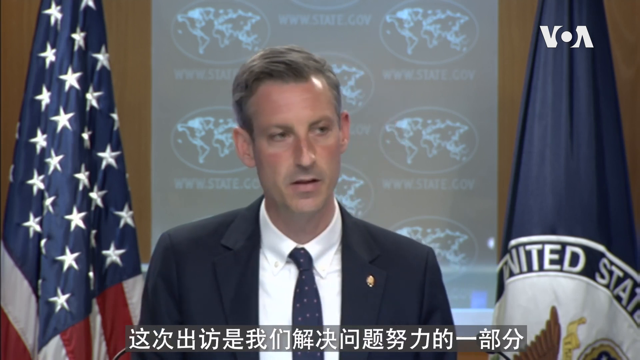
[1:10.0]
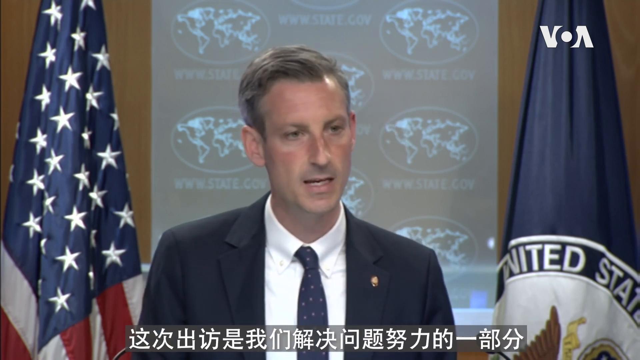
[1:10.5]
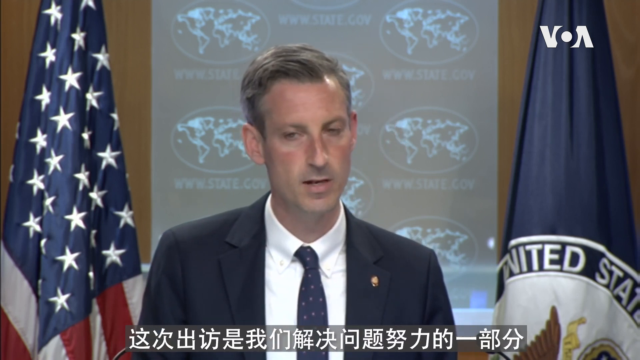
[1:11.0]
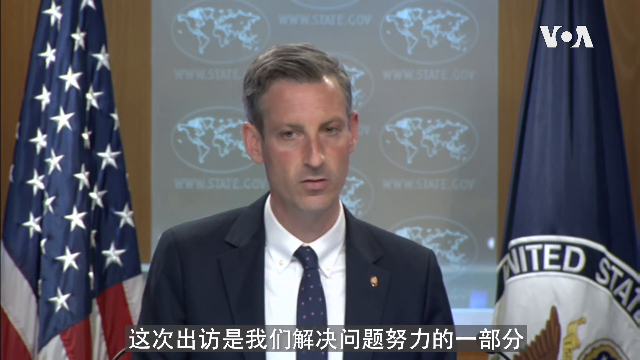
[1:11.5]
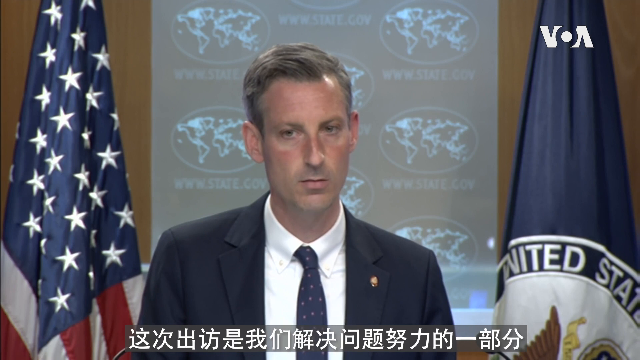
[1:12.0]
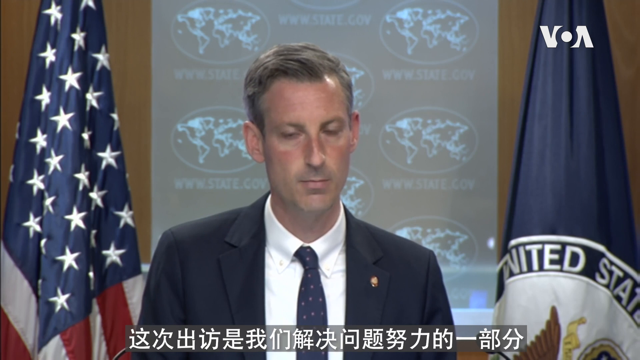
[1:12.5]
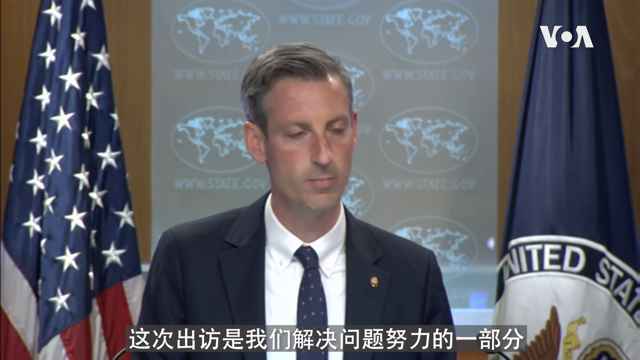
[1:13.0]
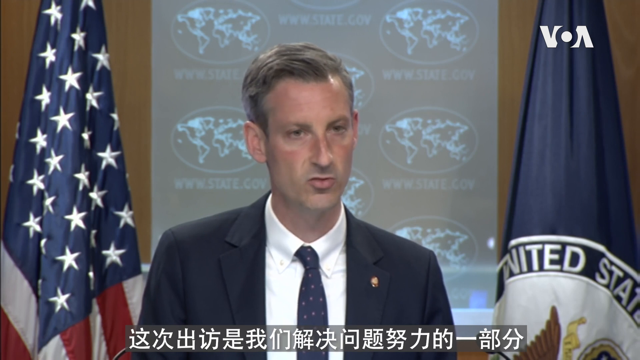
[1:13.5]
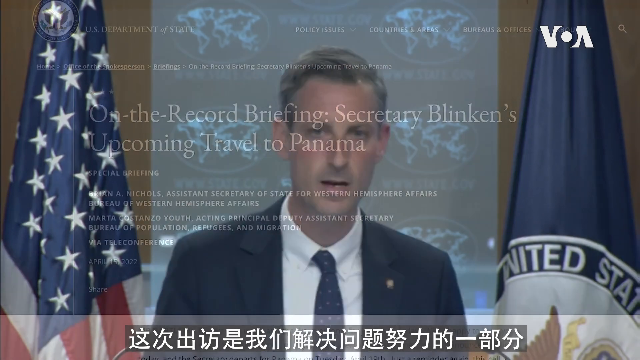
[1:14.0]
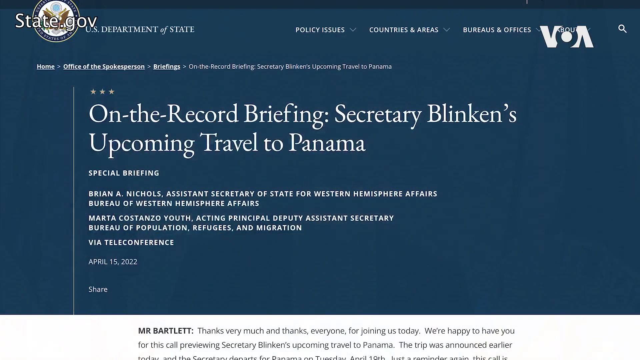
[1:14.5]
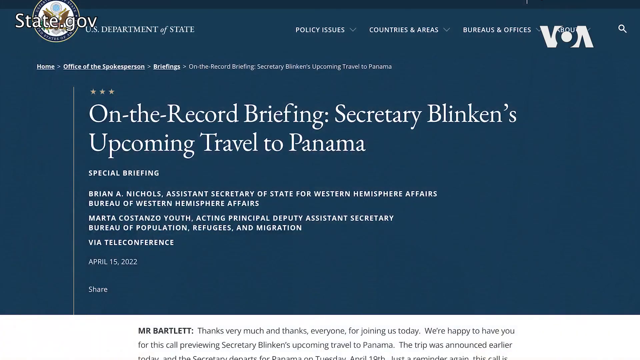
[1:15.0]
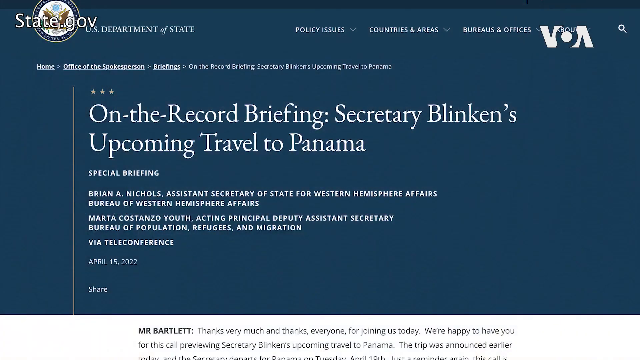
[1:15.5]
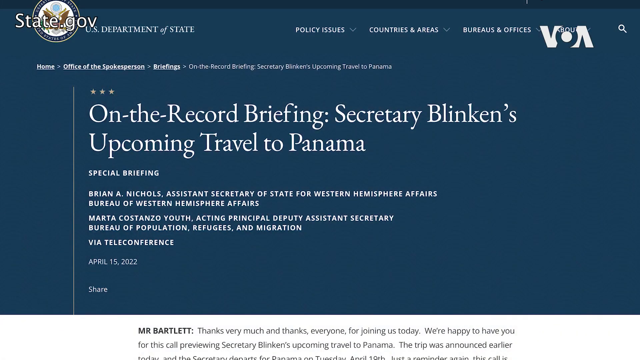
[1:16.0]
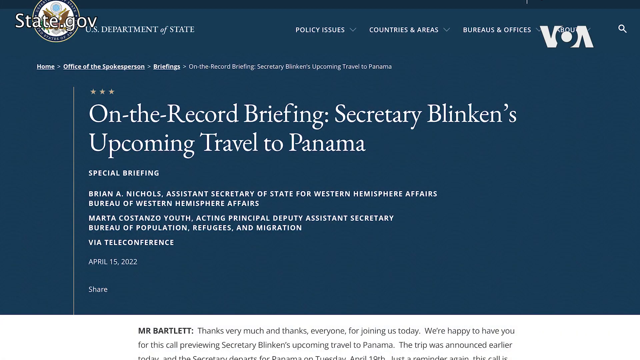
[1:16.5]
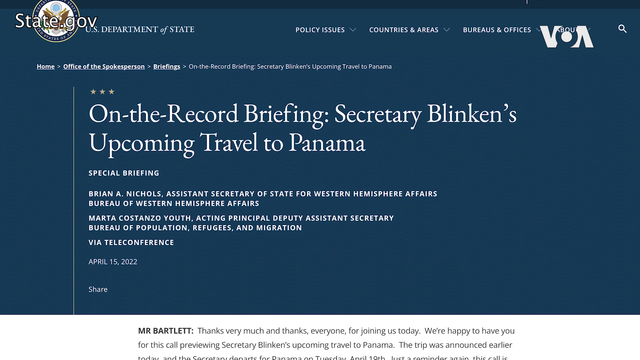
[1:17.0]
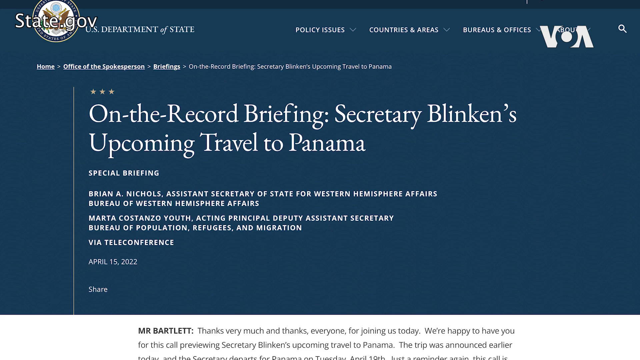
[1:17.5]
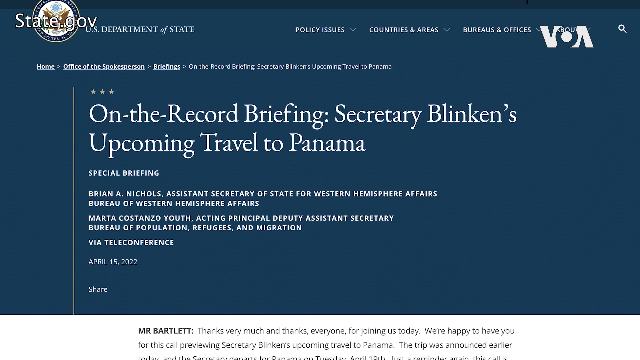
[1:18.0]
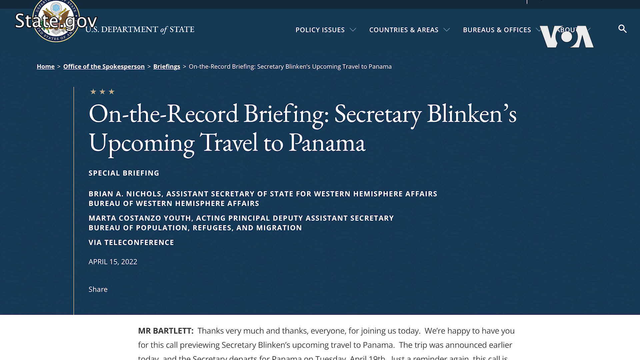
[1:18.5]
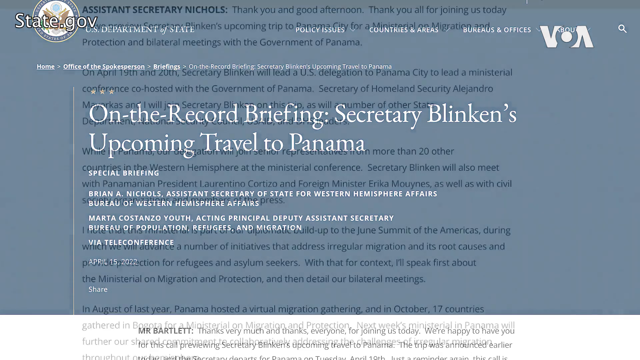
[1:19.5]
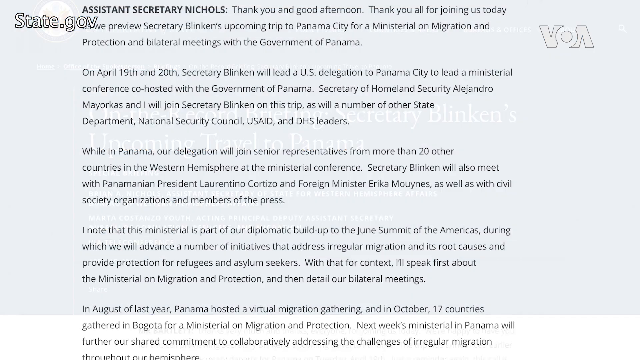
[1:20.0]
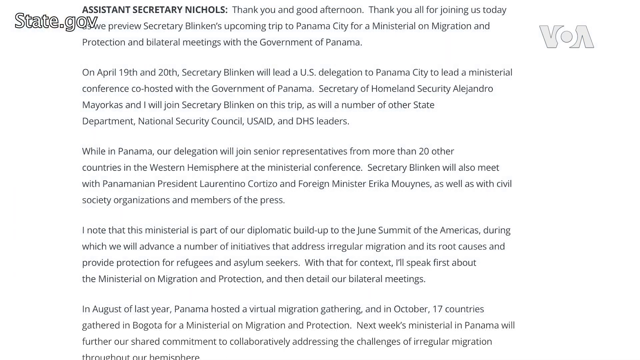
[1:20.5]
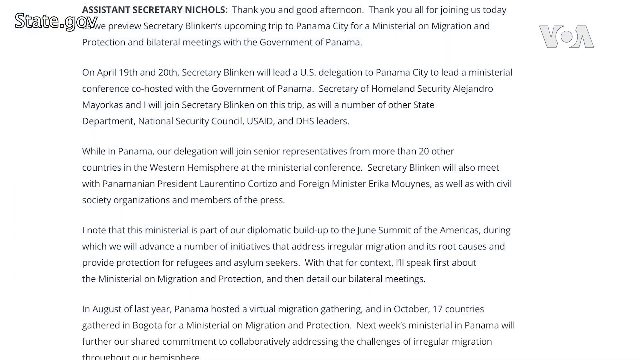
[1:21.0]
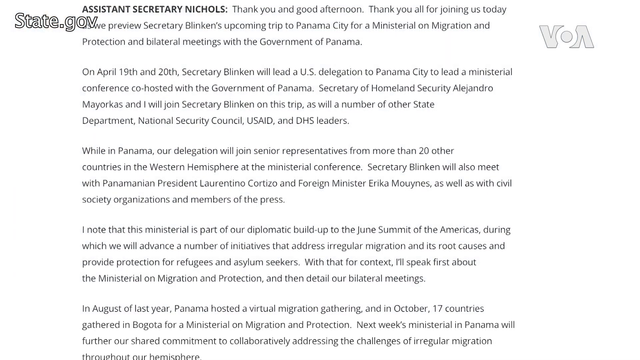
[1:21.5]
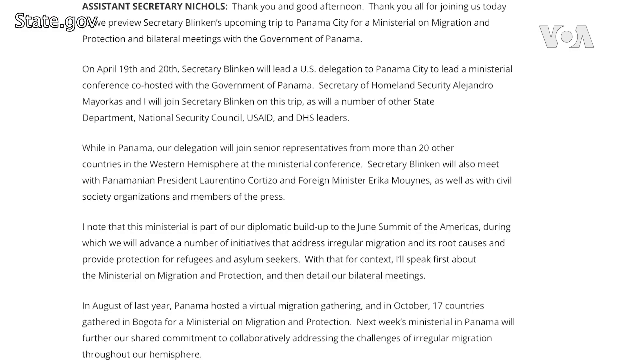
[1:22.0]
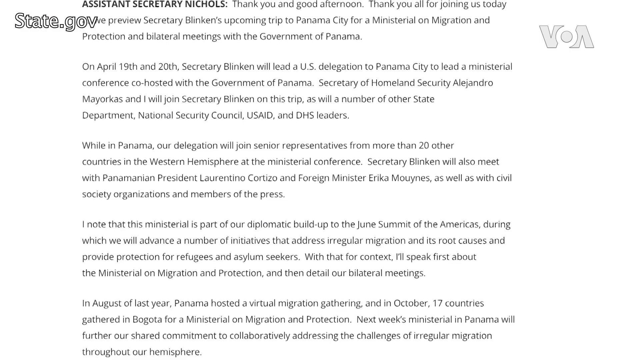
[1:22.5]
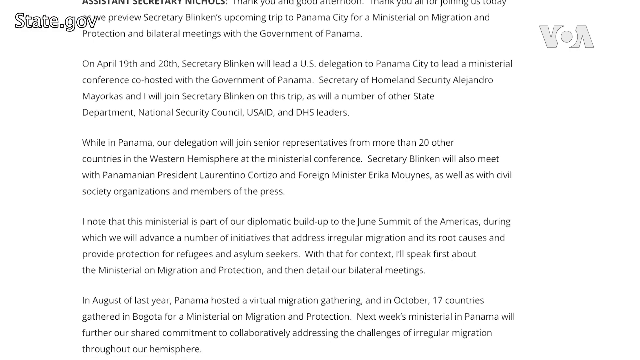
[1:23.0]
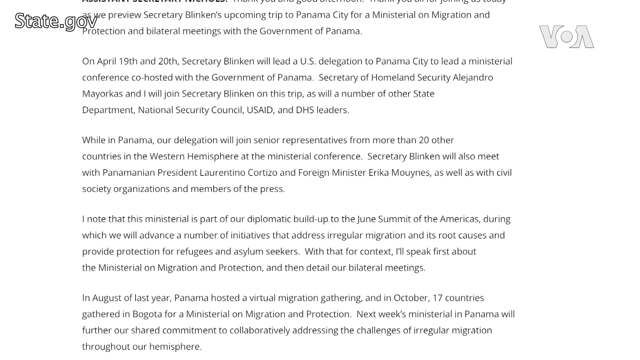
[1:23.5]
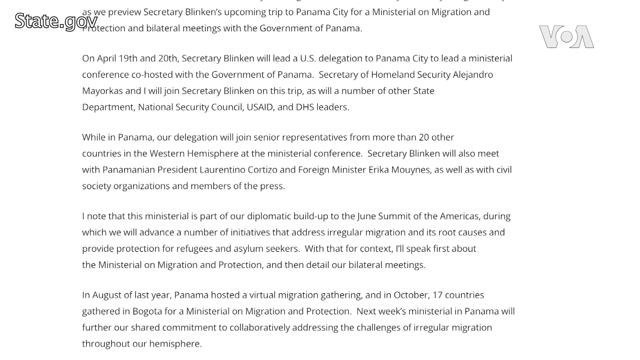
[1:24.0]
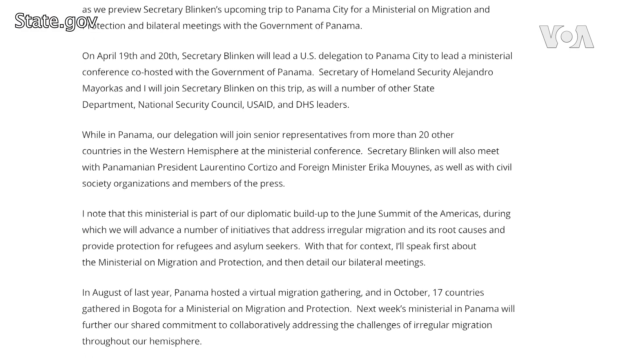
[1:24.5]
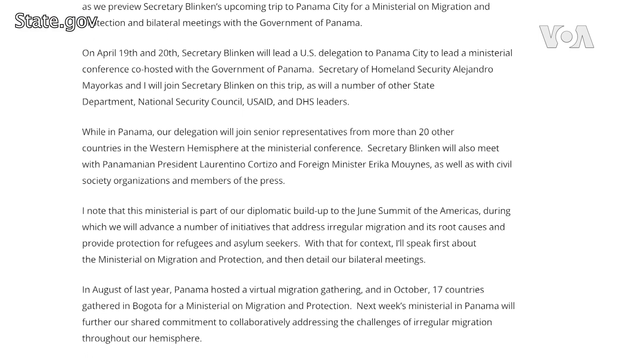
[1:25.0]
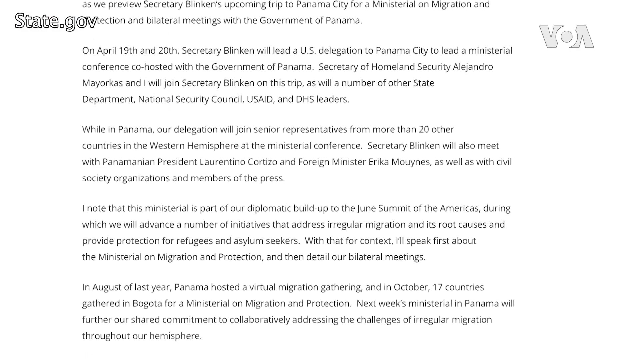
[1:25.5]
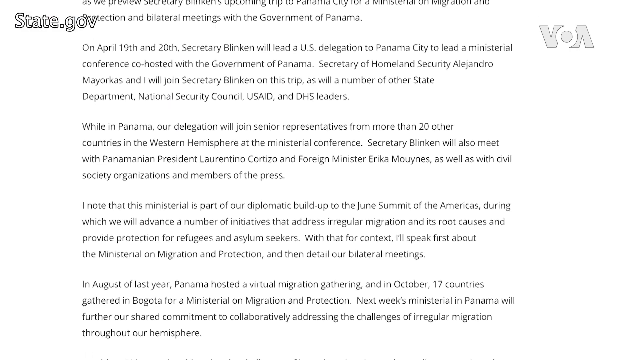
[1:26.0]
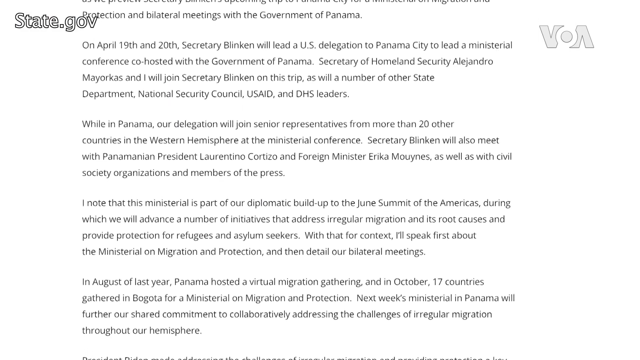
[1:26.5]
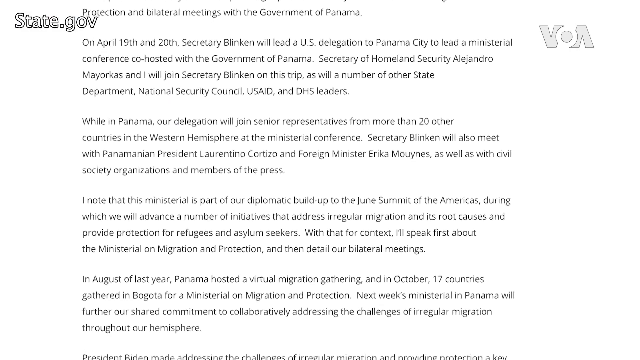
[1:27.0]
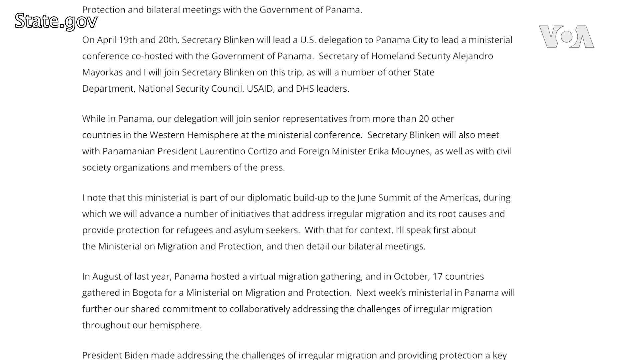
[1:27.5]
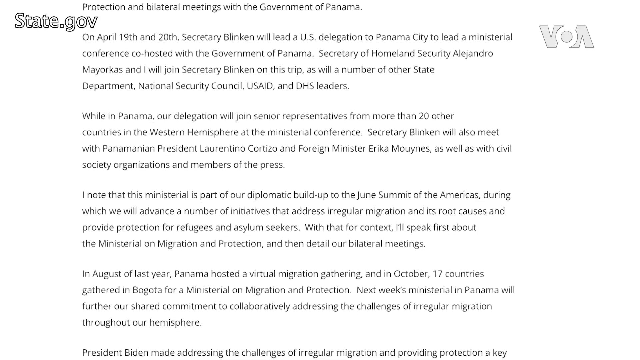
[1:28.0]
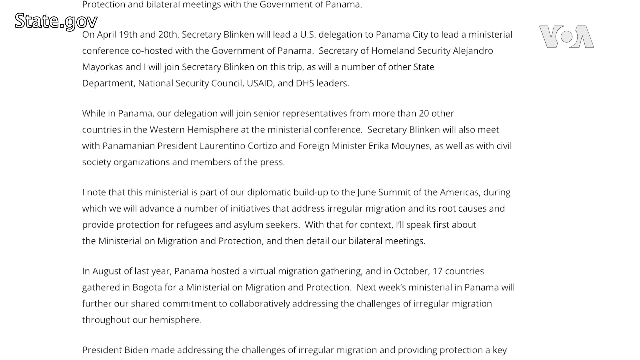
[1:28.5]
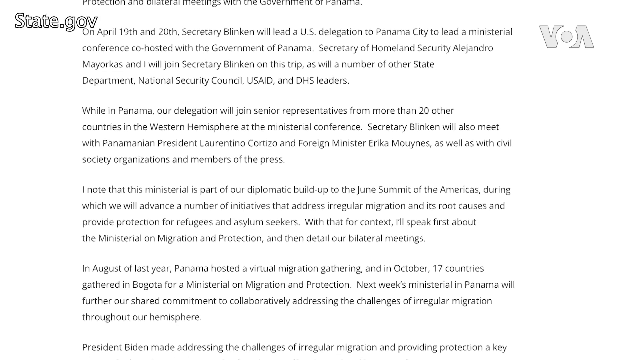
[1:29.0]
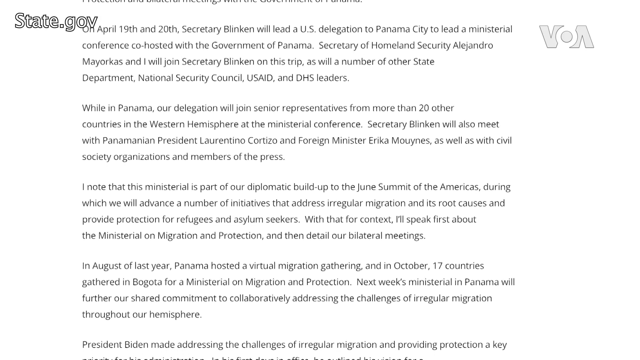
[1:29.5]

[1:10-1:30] The man at the press conference is Caucasian, maybe in his 30s, wearing a blue polka-dot tie, a white undershirt and a blue jacket, with the American flag behind him. Text pops up reading "on the record briefing secretary Belkin's upcoming travel to Panama", along with "U.S. Department of Defense". More information pops up and starts scrolling; it is about Panama and states that Belkin will lead the U.S. delegation to Panama and lead the ministerial conference co-hosted with the governor of Panama.